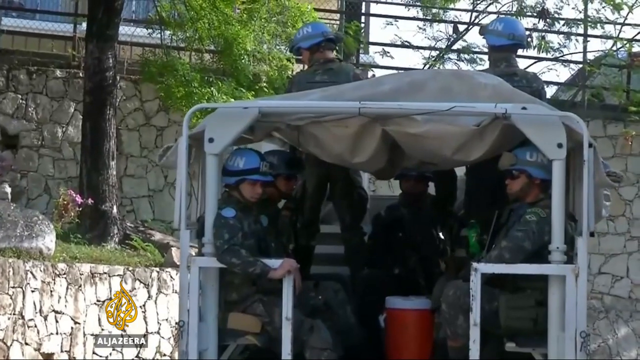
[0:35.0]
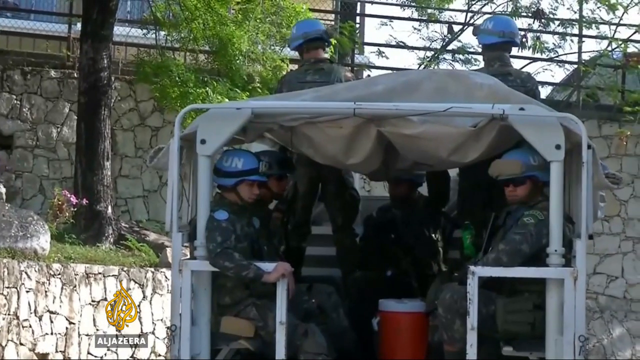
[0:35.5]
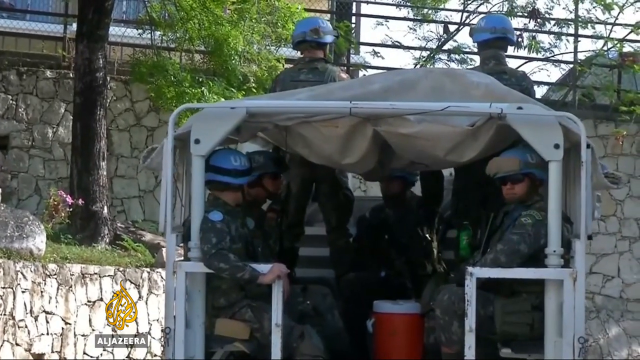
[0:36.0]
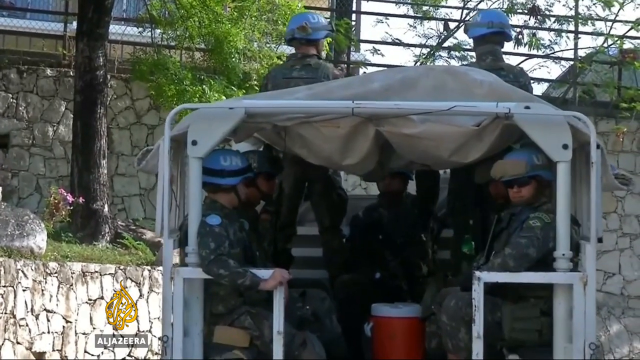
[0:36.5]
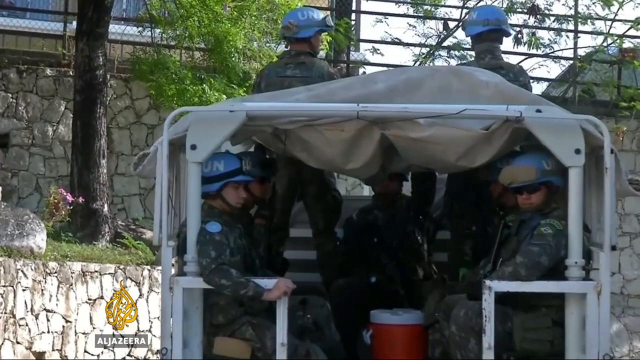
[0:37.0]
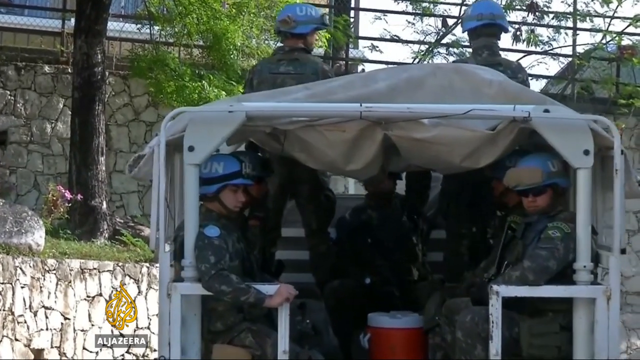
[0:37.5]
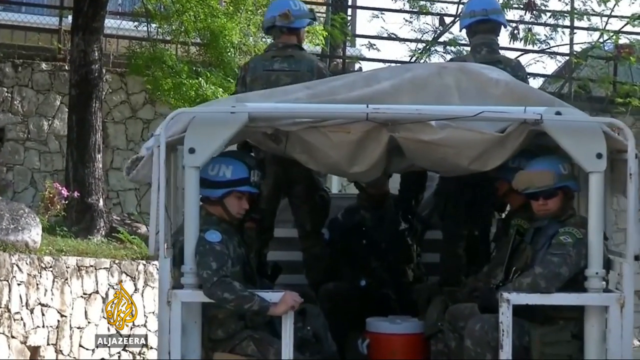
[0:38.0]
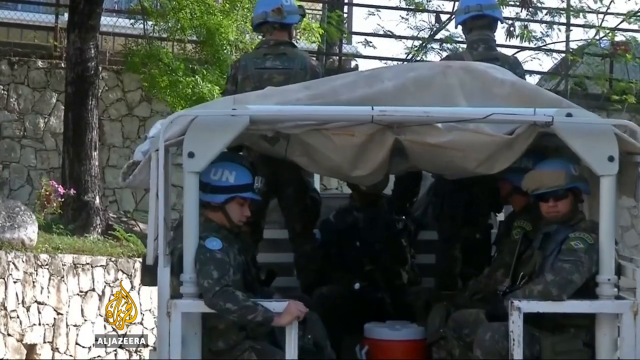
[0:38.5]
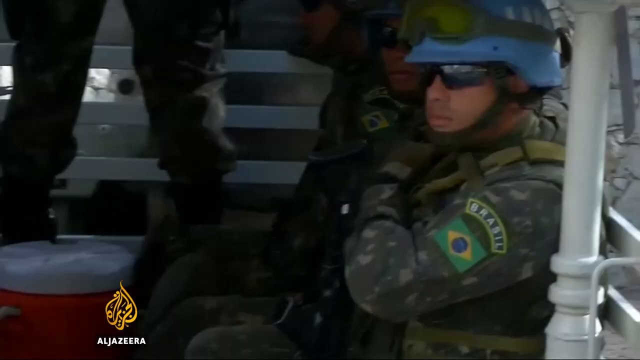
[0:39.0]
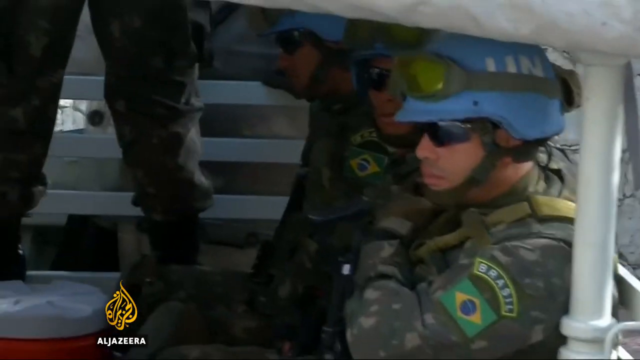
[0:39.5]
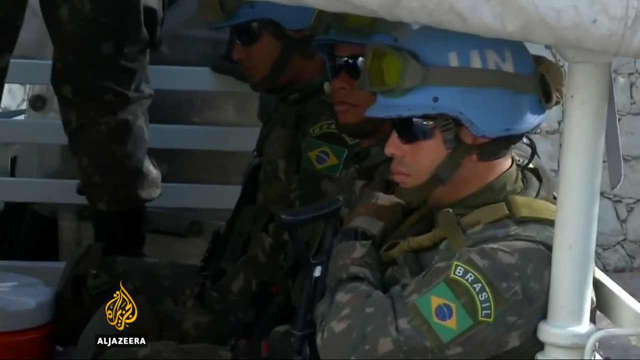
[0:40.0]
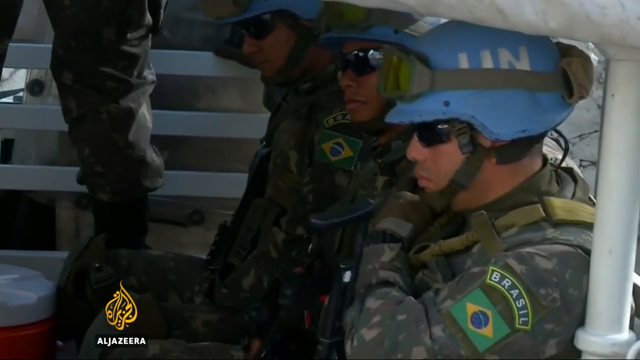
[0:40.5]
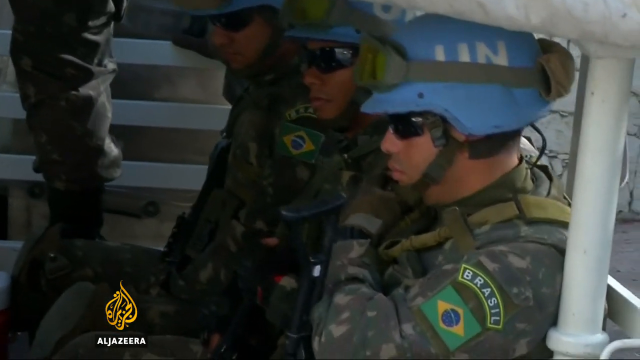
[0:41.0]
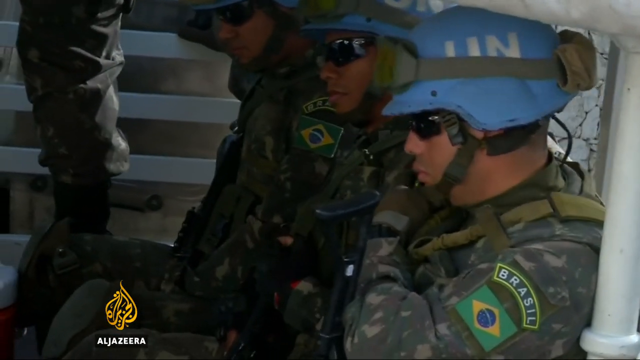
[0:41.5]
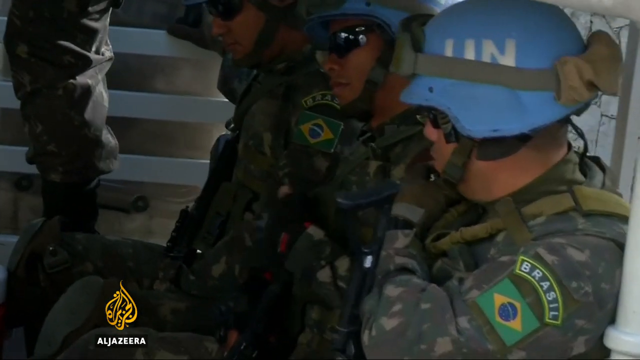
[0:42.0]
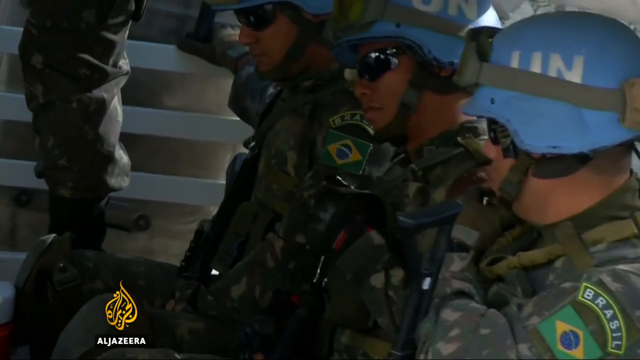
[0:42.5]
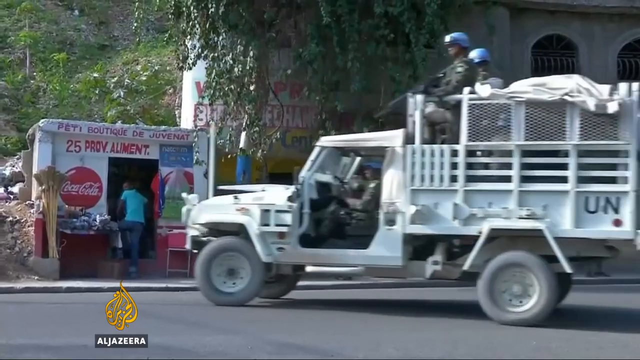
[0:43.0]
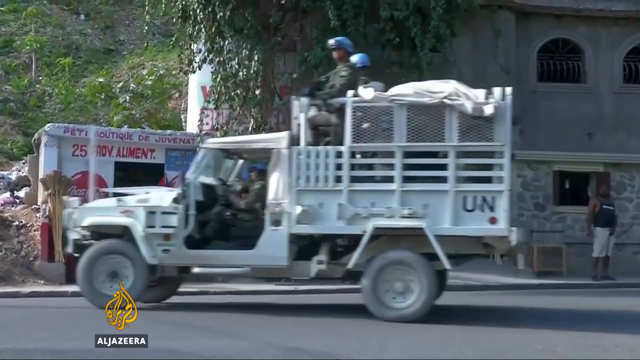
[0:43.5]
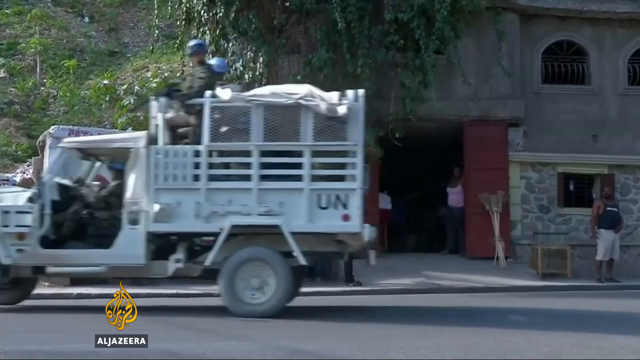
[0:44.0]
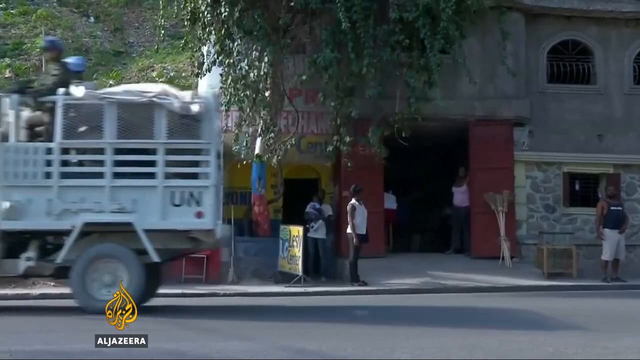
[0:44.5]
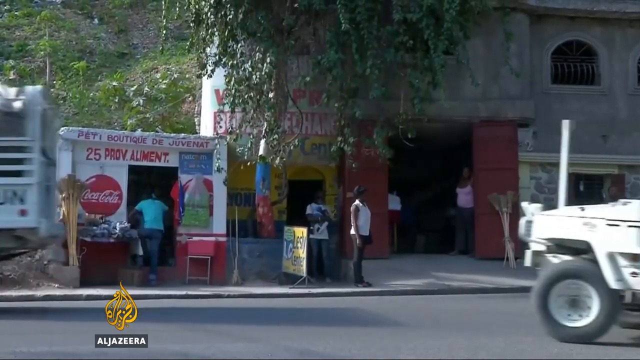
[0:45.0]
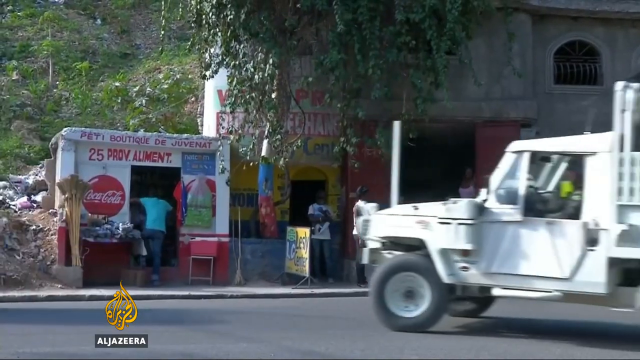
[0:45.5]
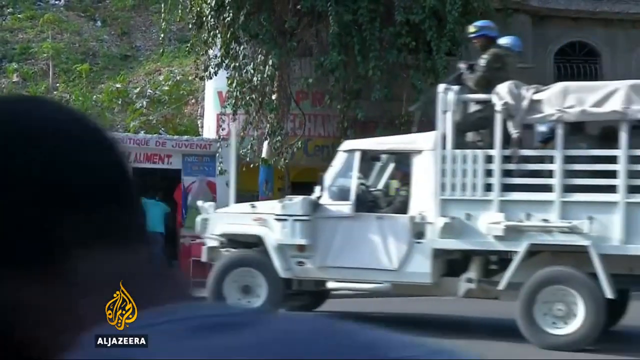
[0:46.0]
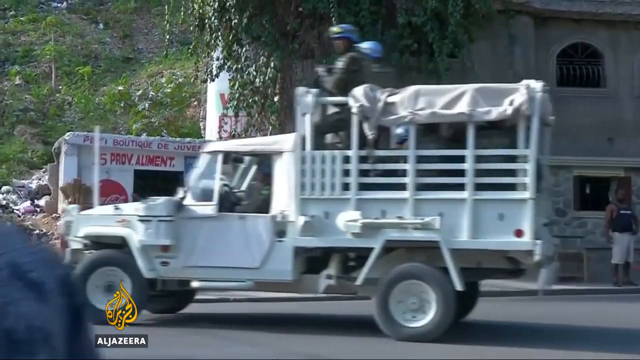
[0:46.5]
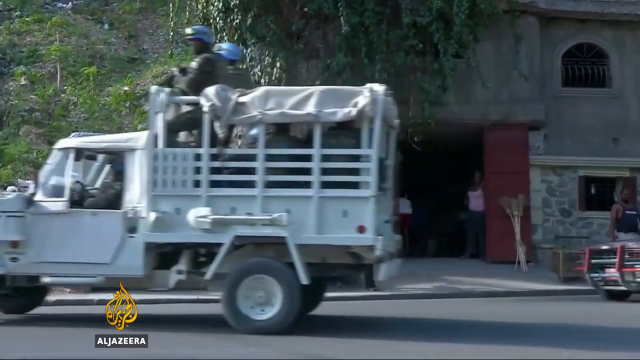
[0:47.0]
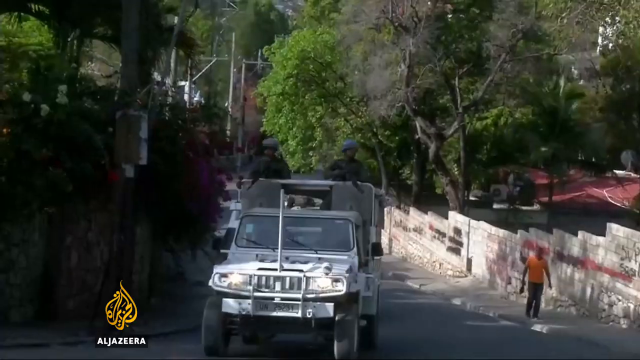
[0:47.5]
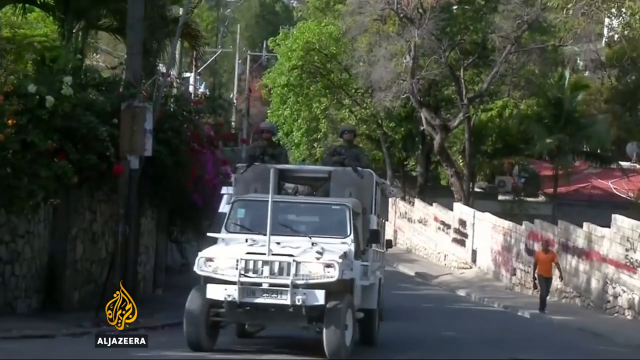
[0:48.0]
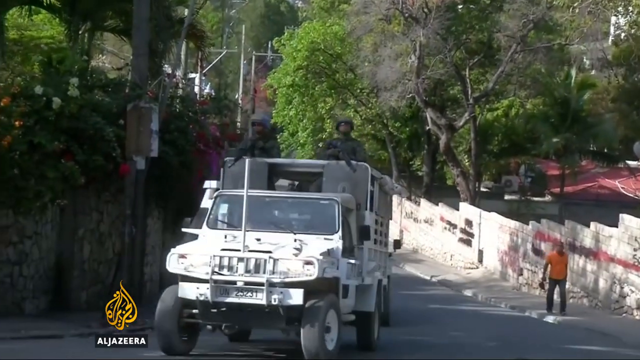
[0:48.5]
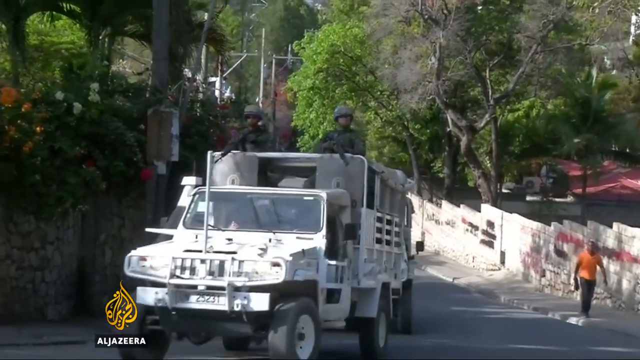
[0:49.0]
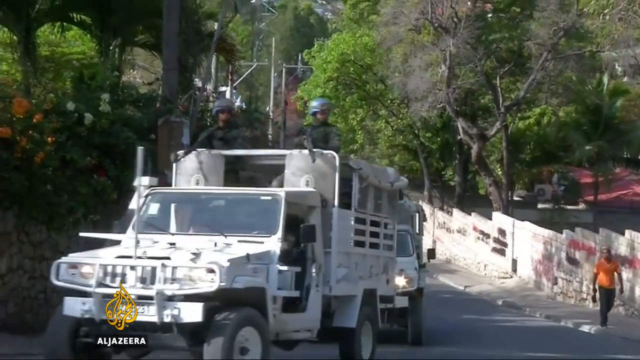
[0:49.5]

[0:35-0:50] The video concerns Haiti's plans to revive the army. Soldiers with their gear ride in a convoy of white jeep-type vehicles with the letters UN on them. Their helmets are a purplish blue with goggles attached to the top. They all wear sunglasses; some sit inside the trucks while others stand looking out the top with guns in their hands. There appear to be about ten people in a truck plus the driver and passenger, and there also seems to be a pole from the hood of the truck. The convoy seems to be driving up a slight hill, past people on the street, with buildings around it. Text reads "Al Jazeera is funded in whole or in part by Qatar".